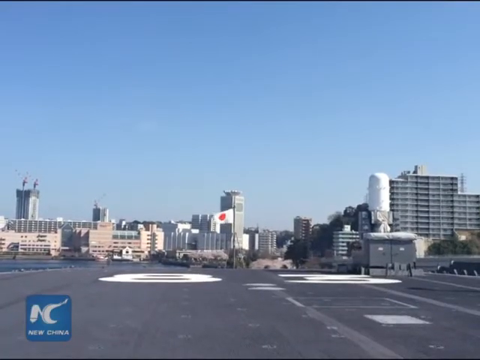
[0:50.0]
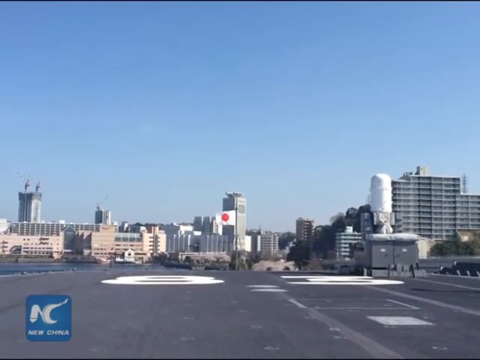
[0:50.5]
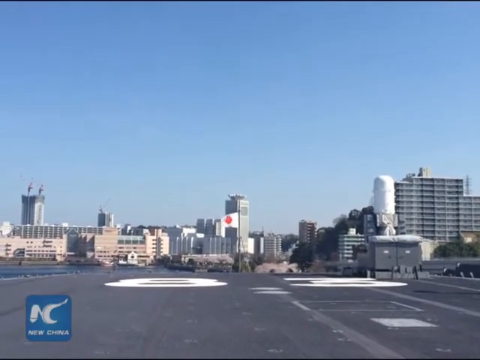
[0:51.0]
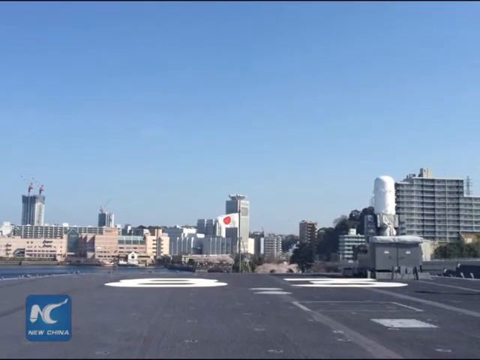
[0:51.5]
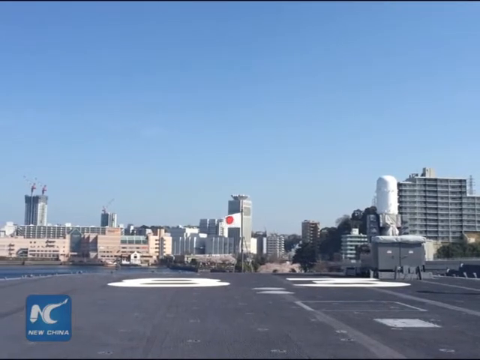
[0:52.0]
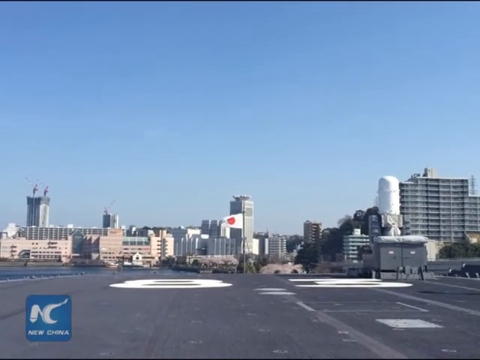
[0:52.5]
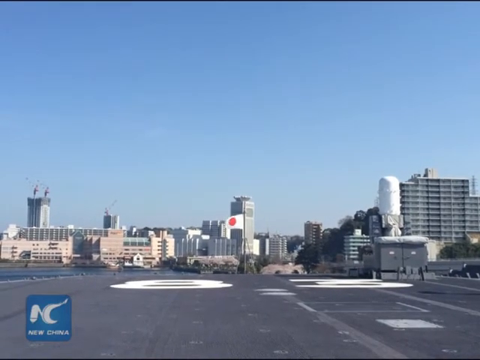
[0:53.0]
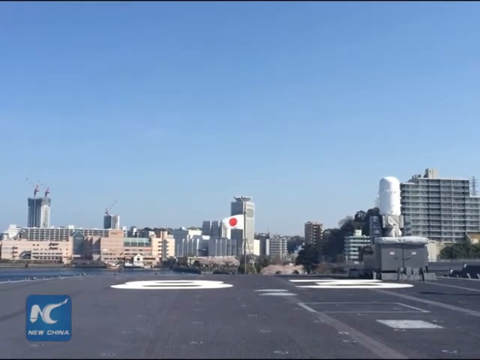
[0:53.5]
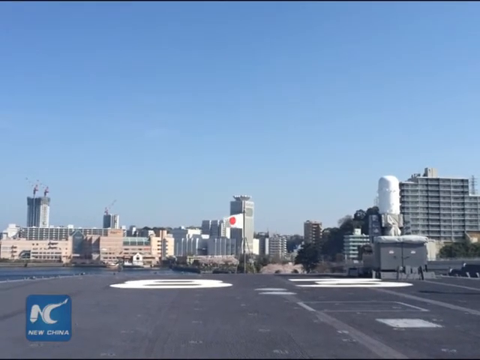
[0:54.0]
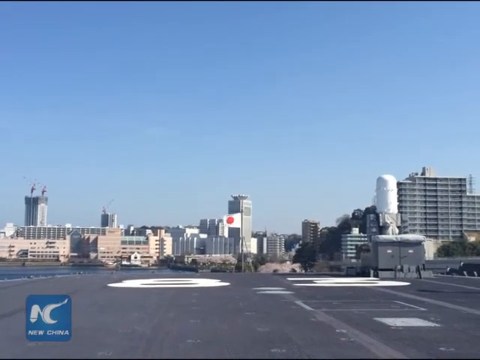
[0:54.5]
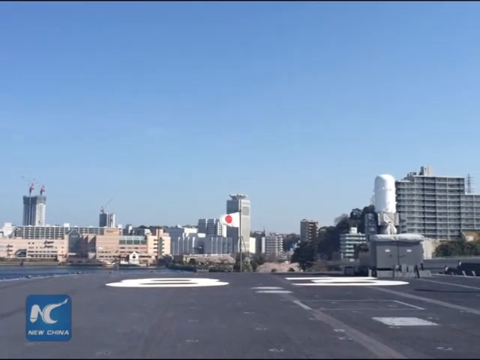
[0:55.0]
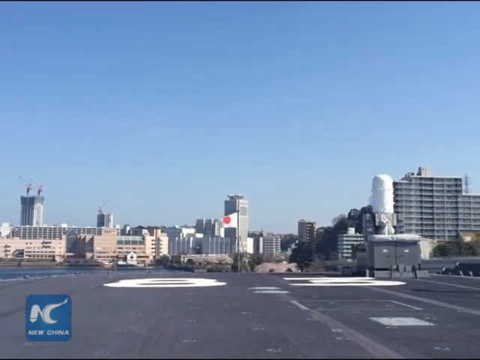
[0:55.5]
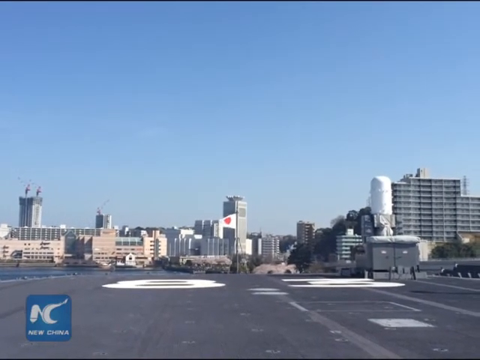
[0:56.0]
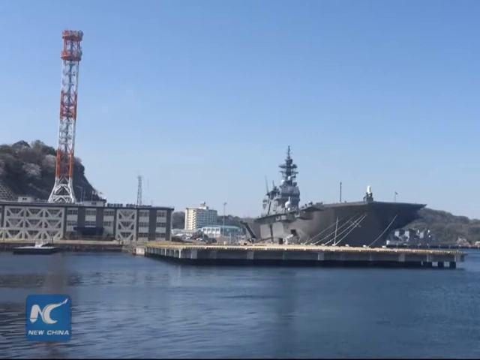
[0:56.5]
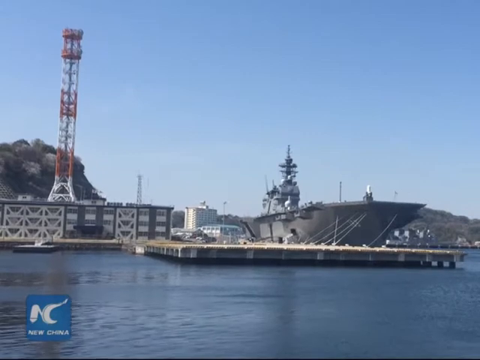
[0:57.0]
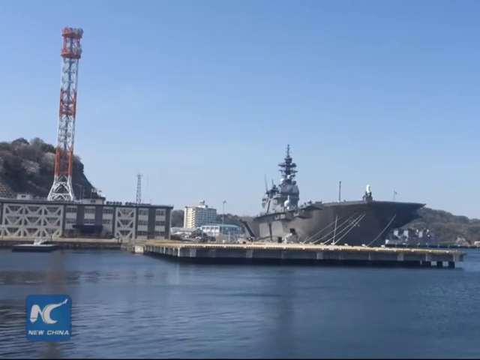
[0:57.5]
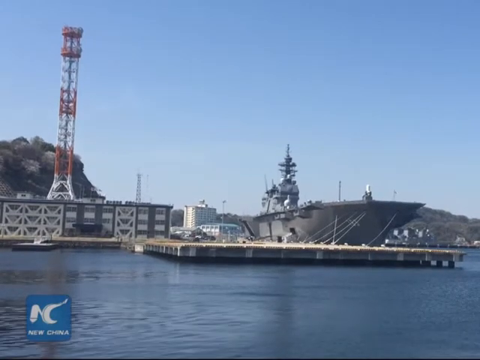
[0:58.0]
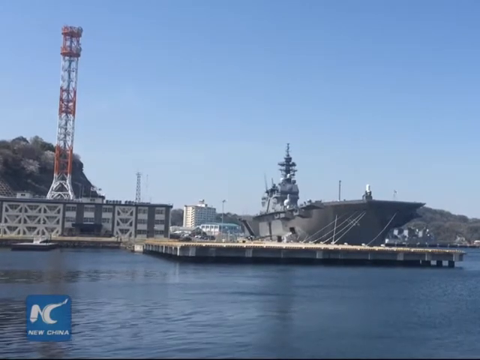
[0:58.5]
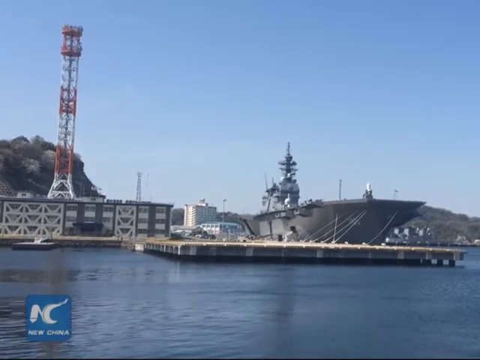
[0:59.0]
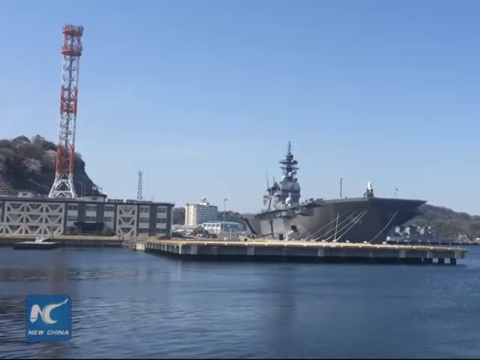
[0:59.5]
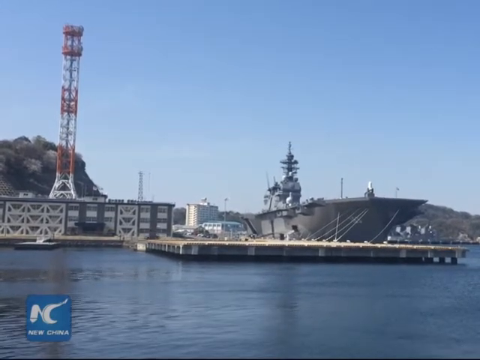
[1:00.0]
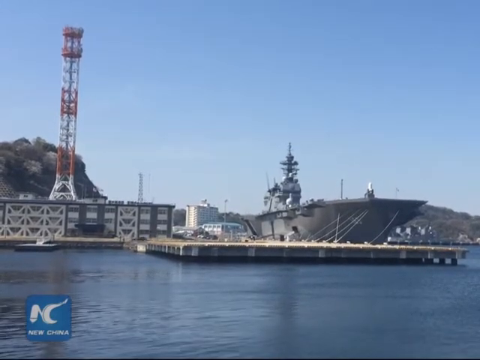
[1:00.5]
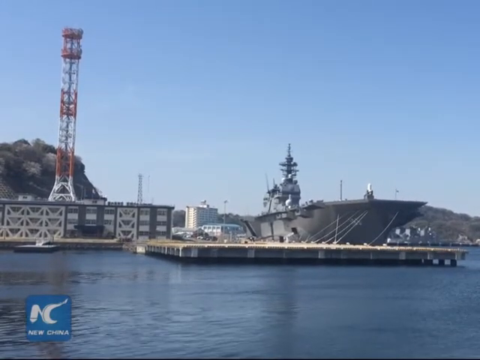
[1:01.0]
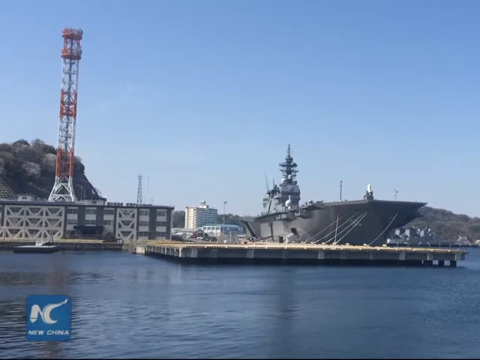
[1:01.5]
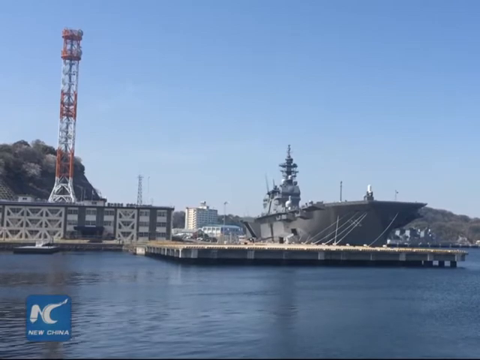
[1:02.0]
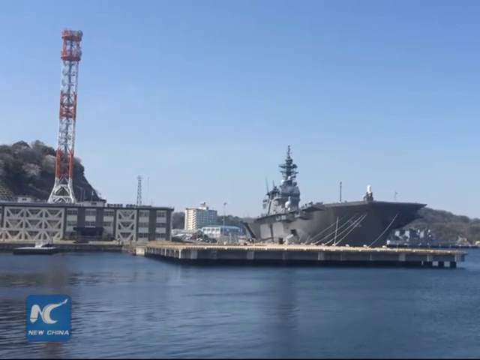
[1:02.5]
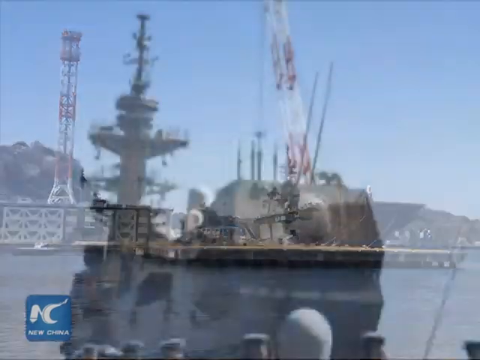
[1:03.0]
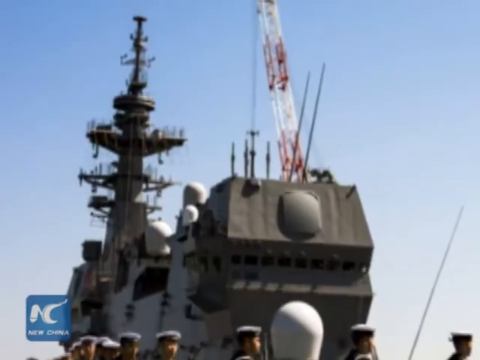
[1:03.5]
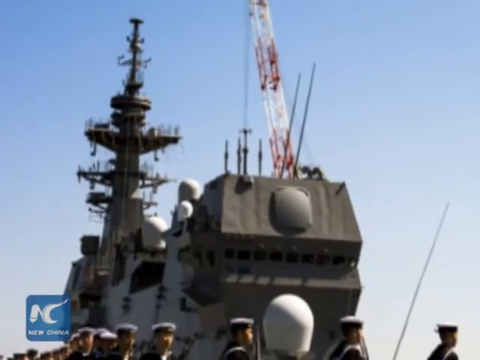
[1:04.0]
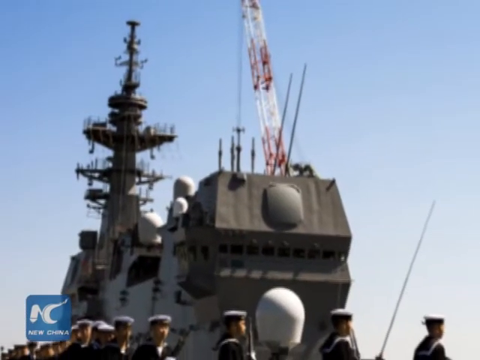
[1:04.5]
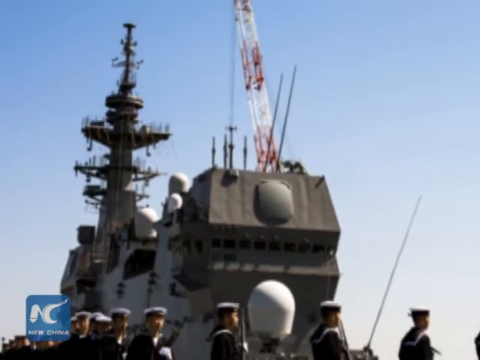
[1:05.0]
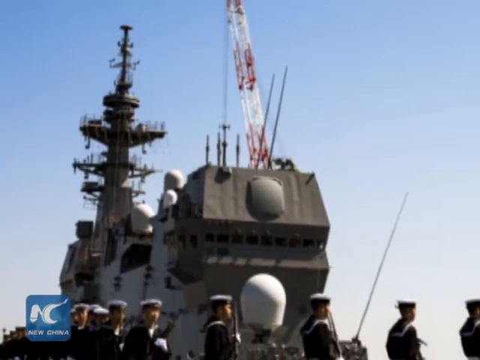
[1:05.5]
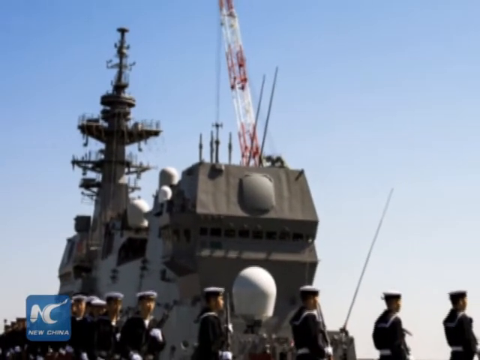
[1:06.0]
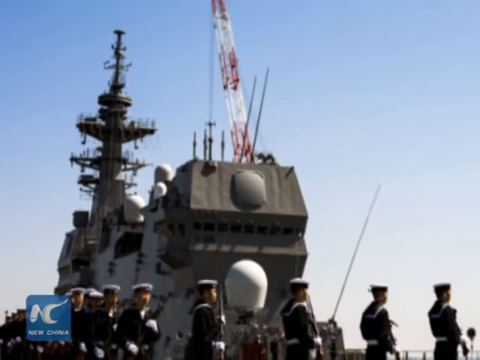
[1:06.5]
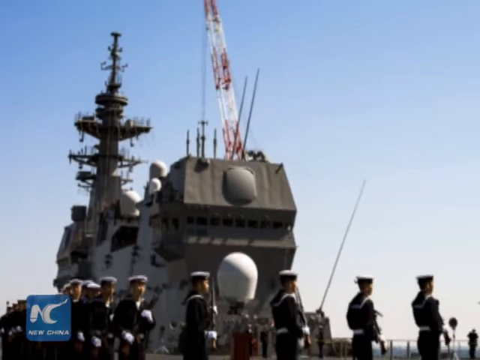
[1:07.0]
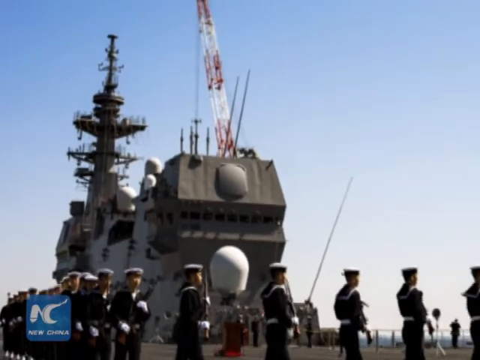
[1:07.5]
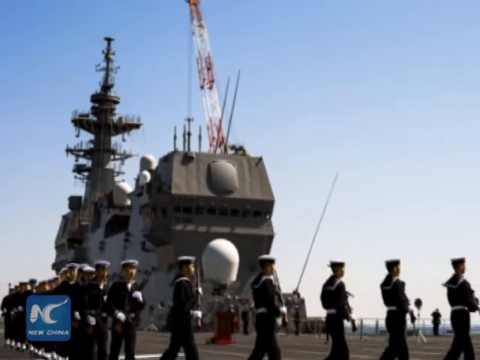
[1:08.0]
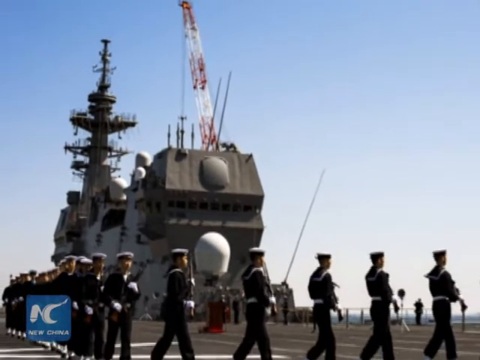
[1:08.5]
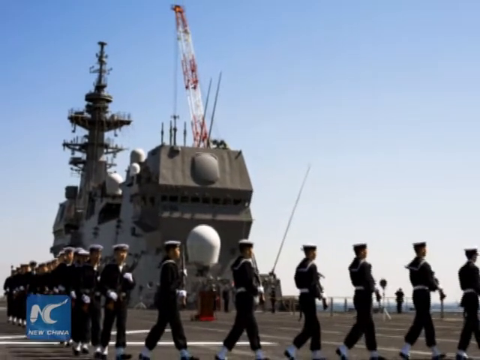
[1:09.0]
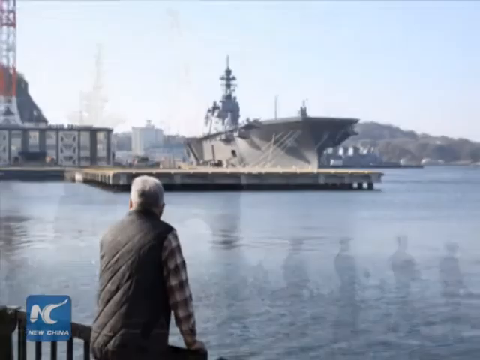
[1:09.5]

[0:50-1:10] In the background, the Japanese flag blows in the wind, sort of billowing, with a cityscape or skyline behind it. The shot is taken from the deck of the battleship's runway, where Japanese letters are painted in giant letters on each lane of the runway, though they cannot be made out from this angle. A wide shot shows the battleship docked at the naval base. To the left of it is a large communications tower painted red and white, attached to a large building. The dock is free of all other ships aside from the naval battleship, which is just kind of sitting there, not moving through the water. A car passes by on the road. A large crane is attached to the ship for loading and unloading, and in old photos people look out over the sea, staring at the ship.